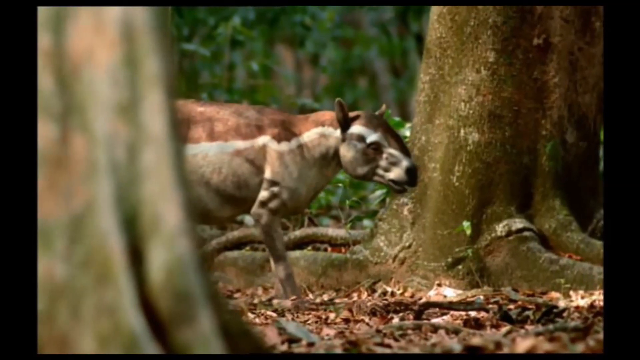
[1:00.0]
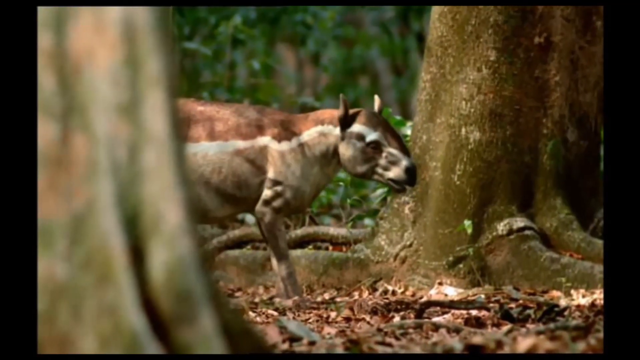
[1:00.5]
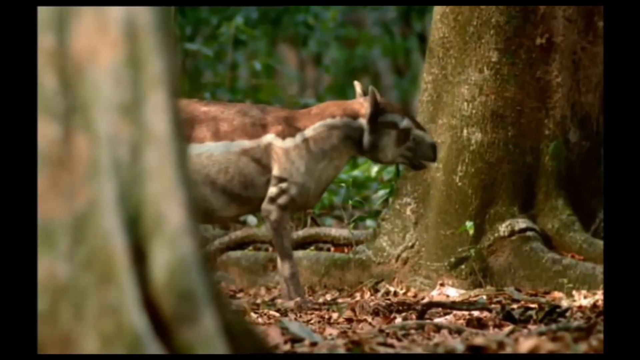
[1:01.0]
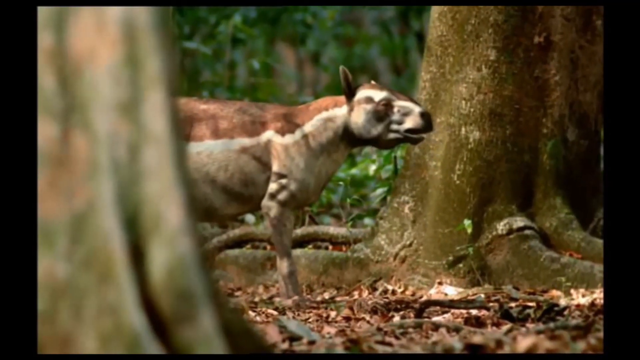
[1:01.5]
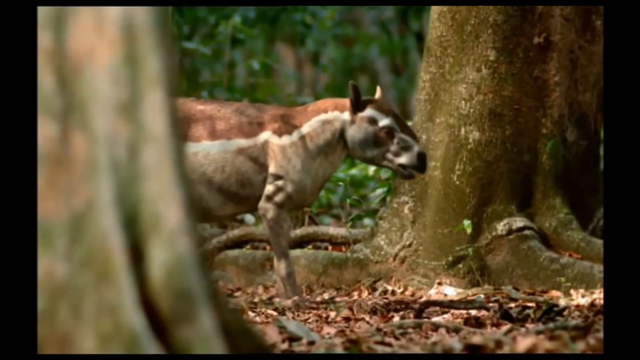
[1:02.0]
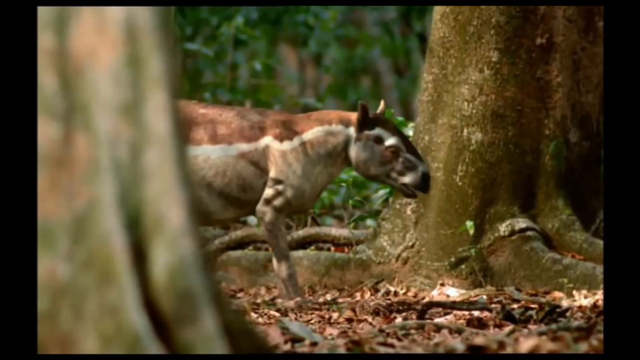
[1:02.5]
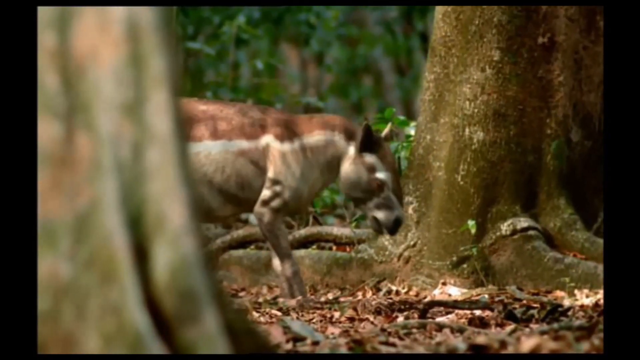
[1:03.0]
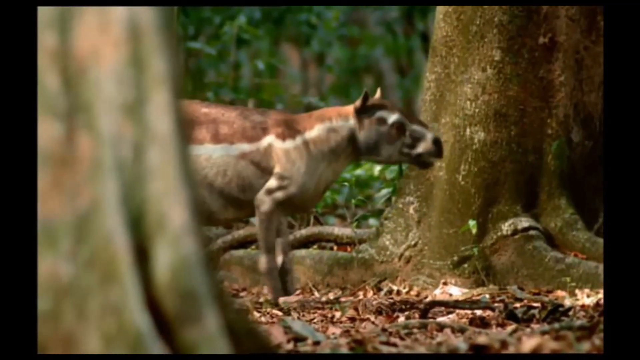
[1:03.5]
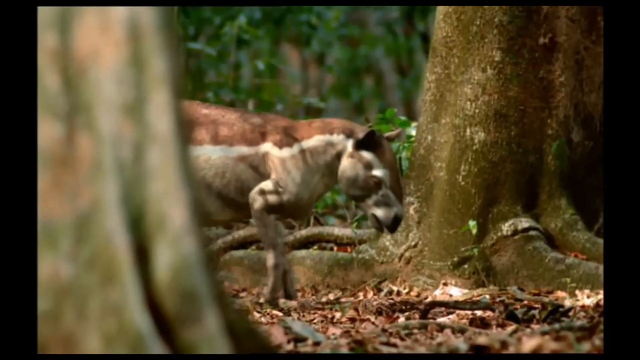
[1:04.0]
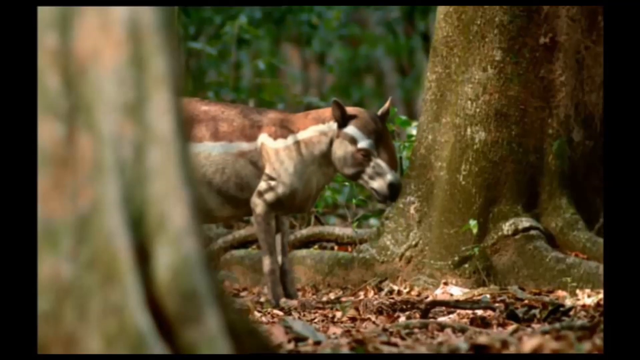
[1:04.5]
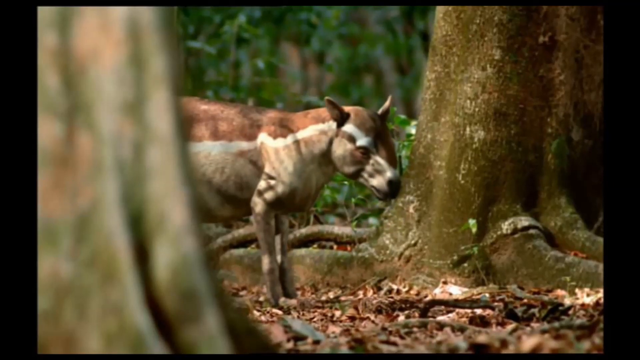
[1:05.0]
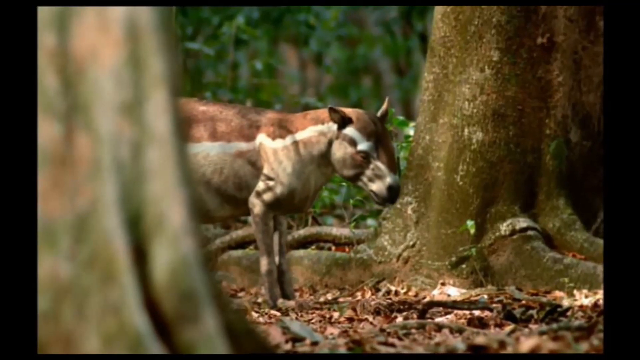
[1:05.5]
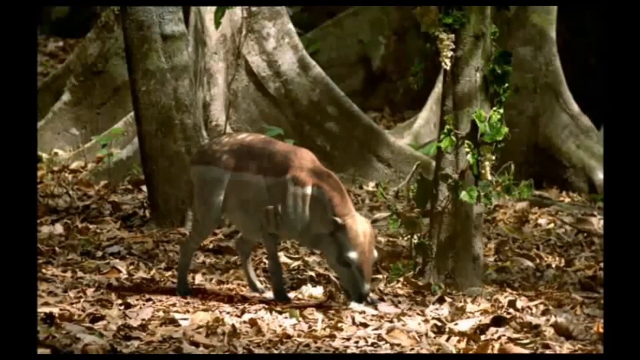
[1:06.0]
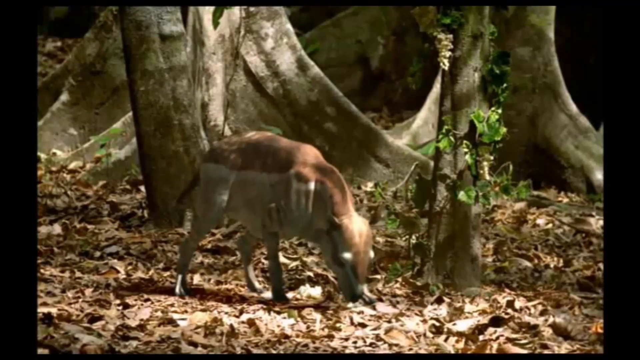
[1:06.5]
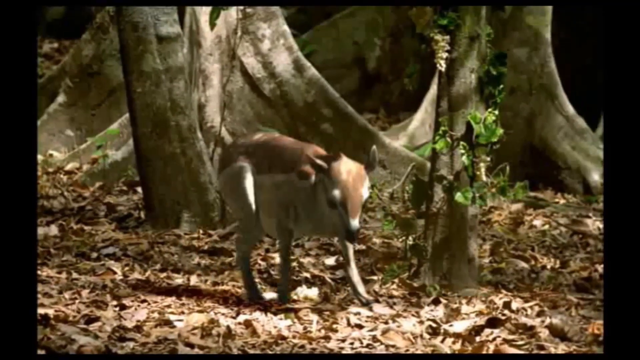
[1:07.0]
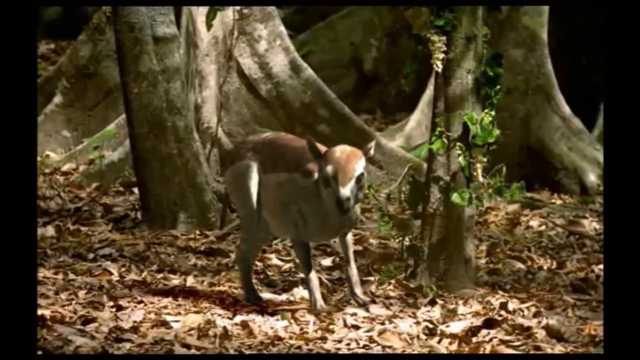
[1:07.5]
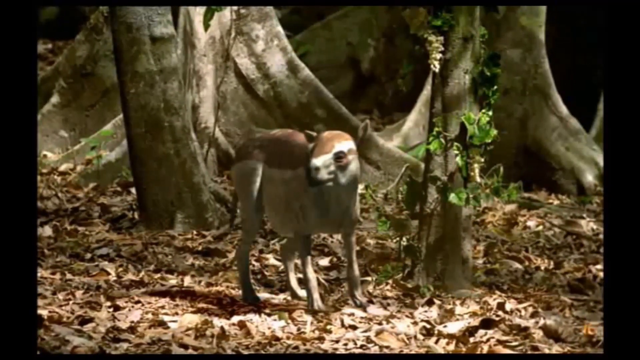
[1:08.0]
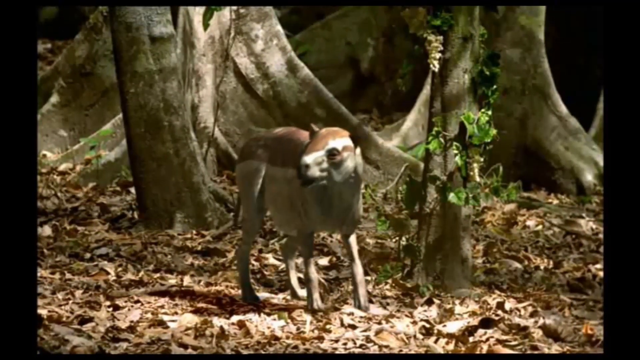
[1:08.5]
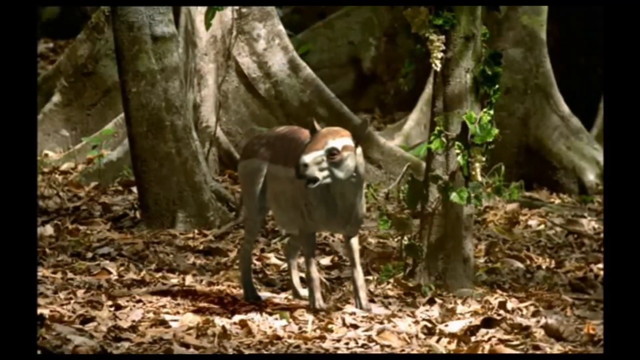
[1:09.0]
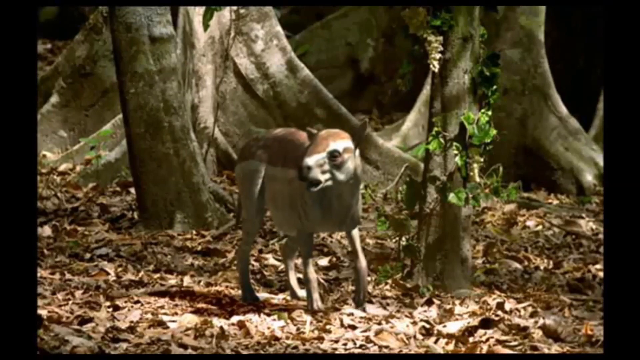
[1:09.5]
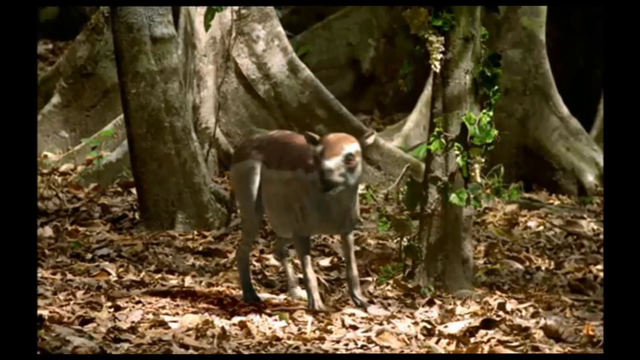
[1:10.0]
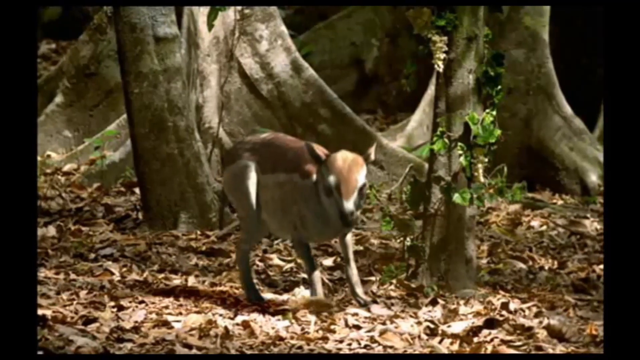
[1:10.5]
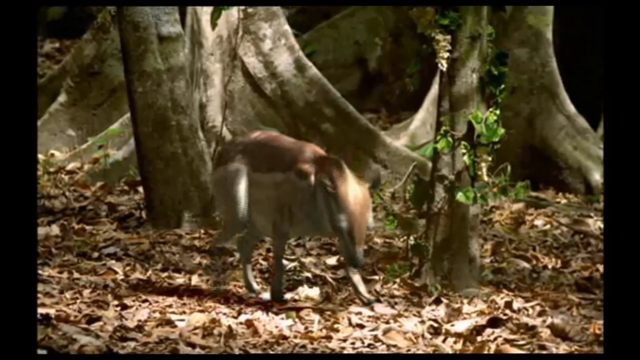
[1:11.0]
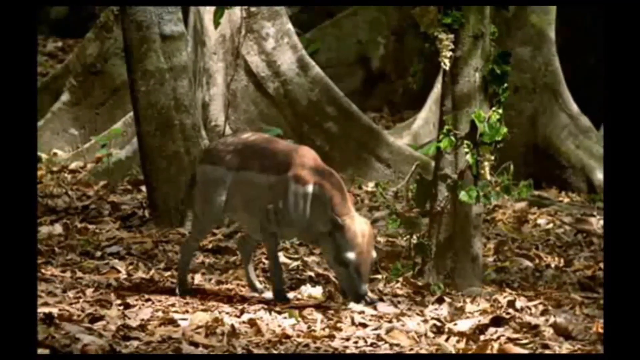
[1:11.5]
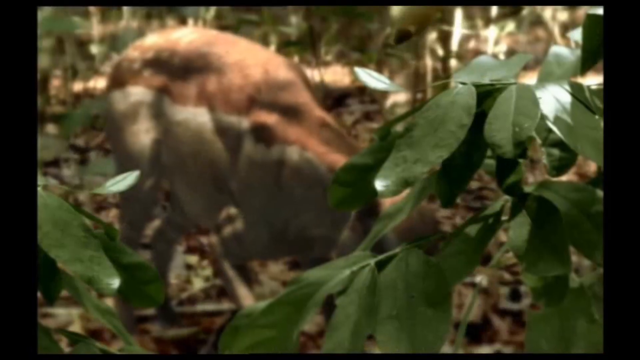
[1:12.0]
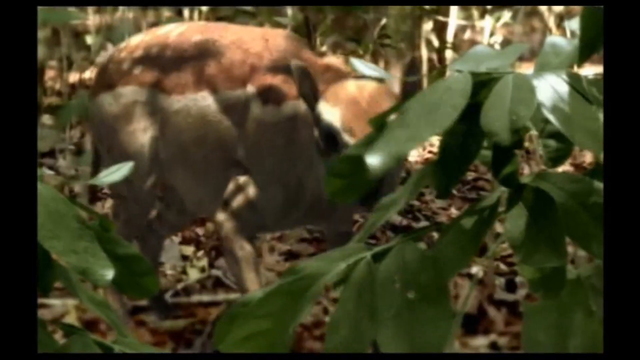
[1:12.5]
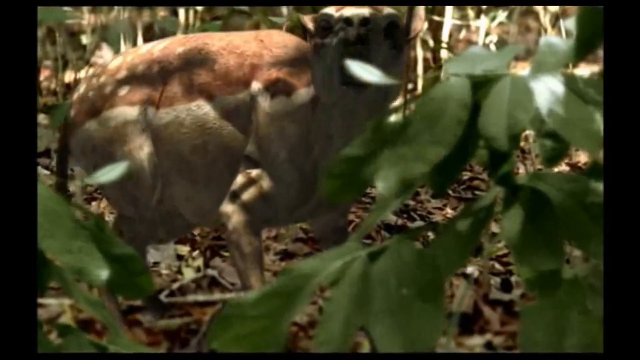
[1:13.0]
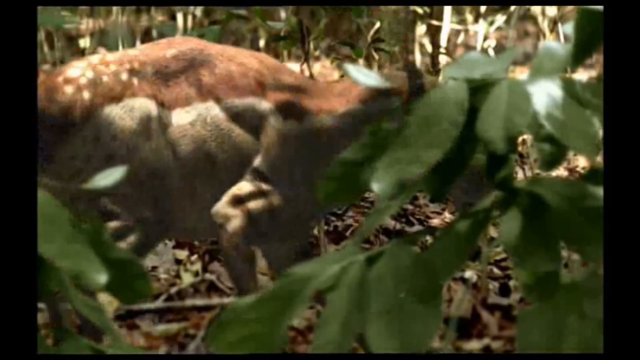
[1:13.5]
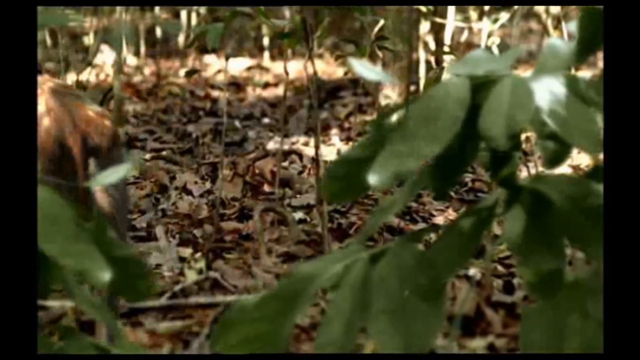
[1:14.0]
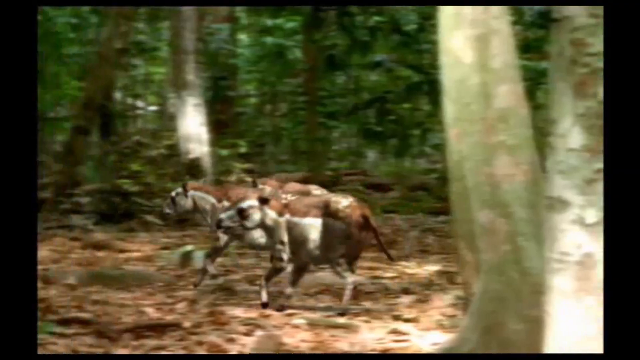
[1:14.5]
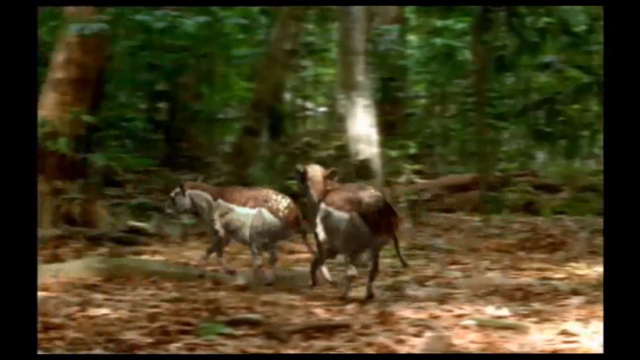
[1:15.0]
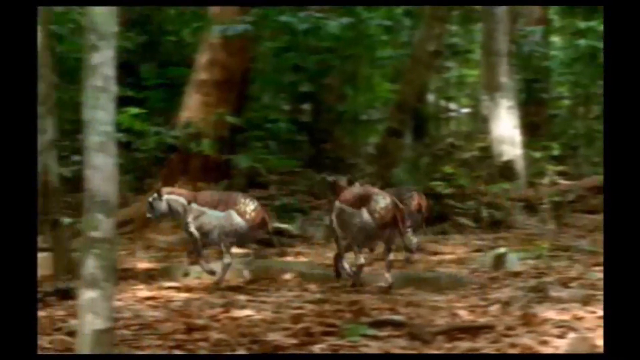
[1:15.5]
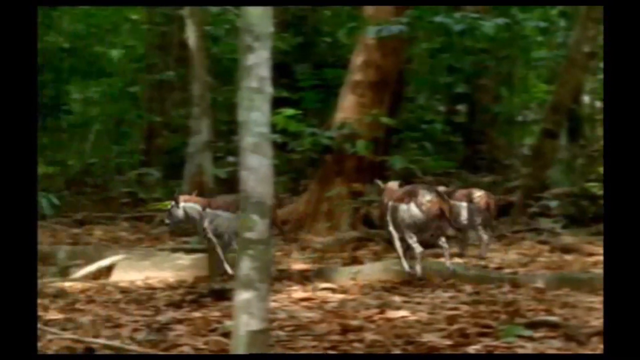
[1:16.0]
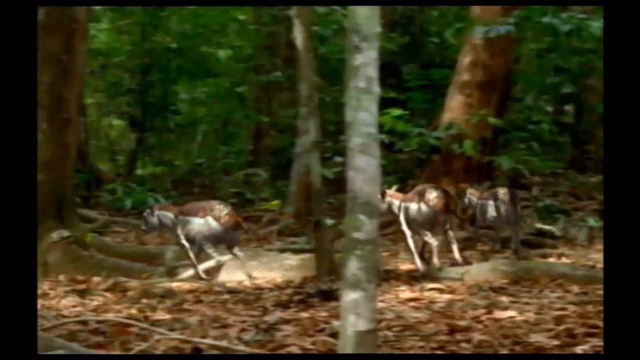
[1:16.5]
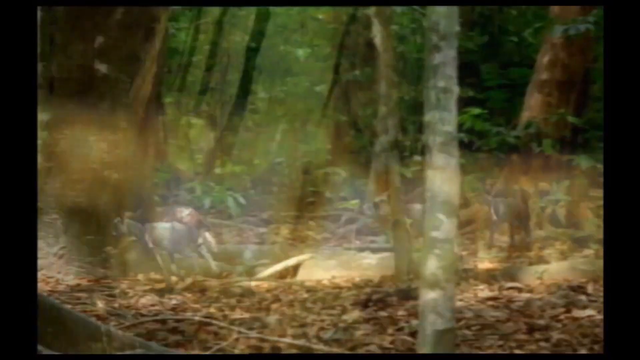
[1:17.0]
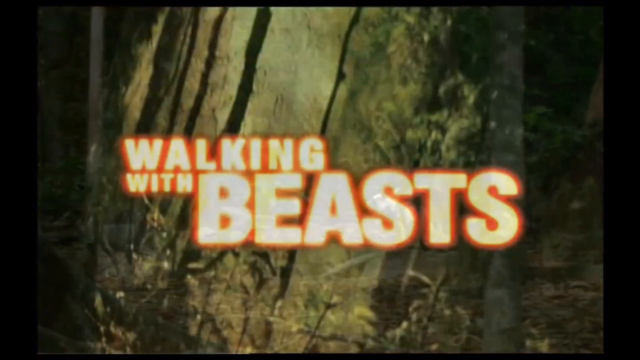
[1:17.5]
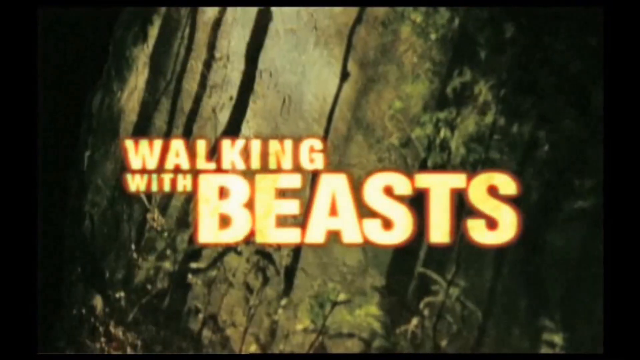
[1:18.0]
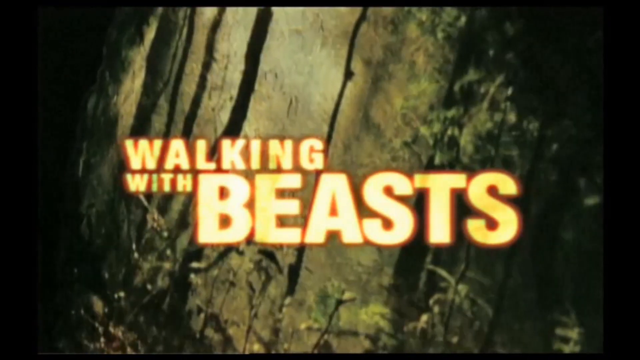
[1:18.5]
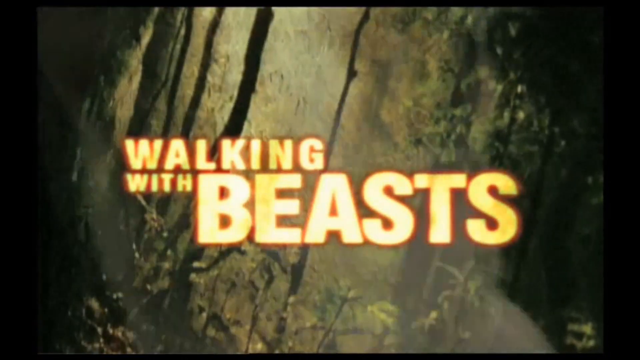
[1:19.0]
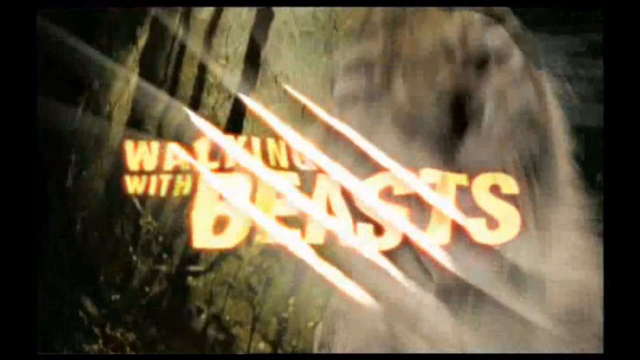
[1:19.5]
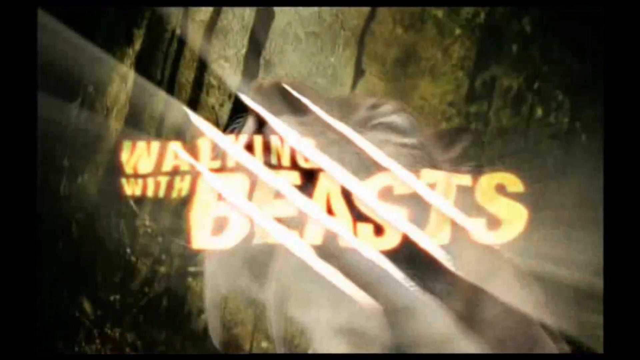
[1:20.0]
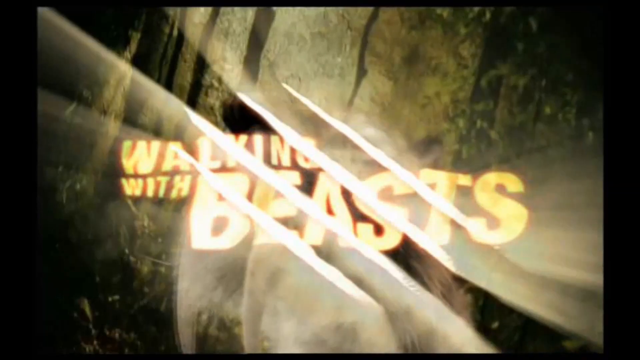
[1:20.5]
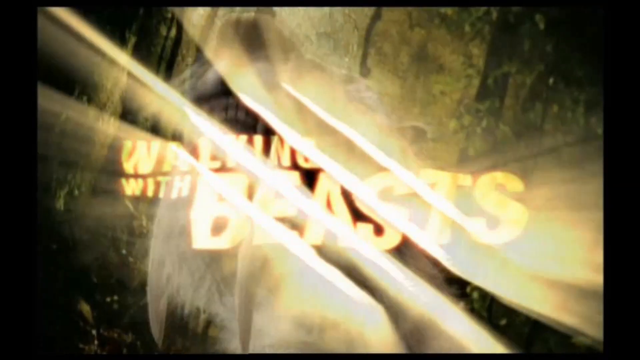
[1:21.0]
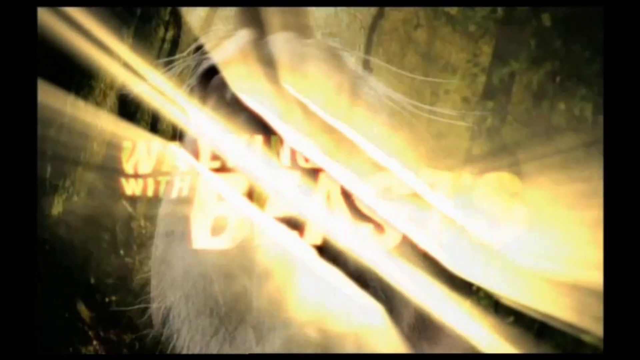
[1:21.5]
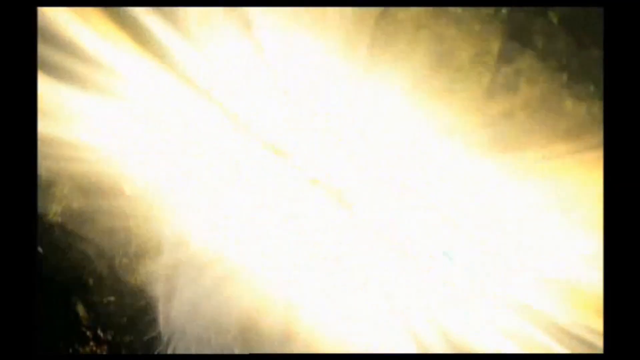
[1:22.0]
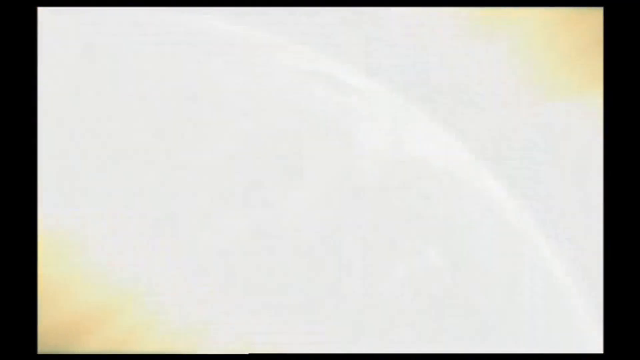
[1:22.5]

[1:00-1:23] The strange animal moves in a movement resembling that of a donkey or horse. The camera views the animal from the side, behind something blurry, so that half of the animal is visible: the front, with the two legs forward, and the head. The head of this buck resembles that of a donkey, and the animal stands on the ground. A different angle shows the animal picking up its head from the ground. The animal then runs with other animals beside it in a direction towards the inside of the forest. The text "Walking with Beasts" then appears on the screen again, with a flash of lines that cut through it and a yellow-like light, as a beast roars before the text in the background.